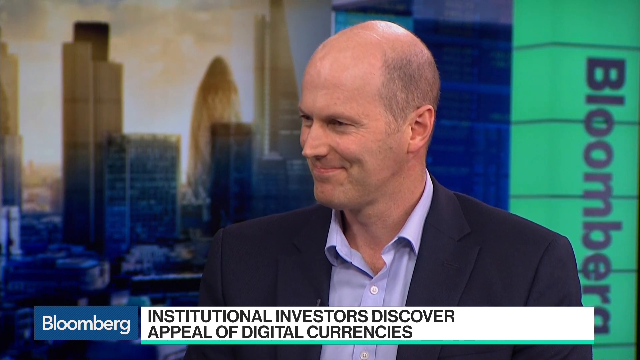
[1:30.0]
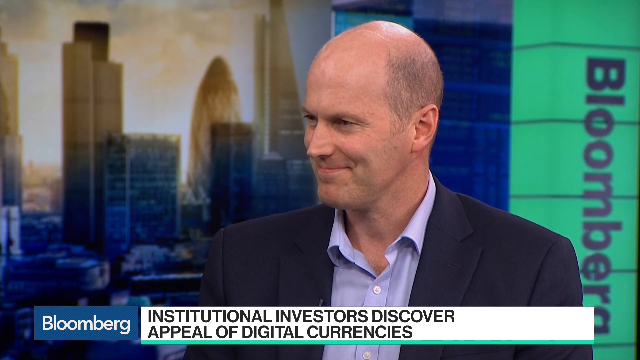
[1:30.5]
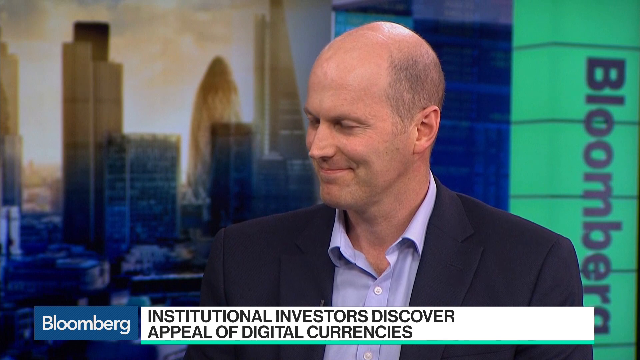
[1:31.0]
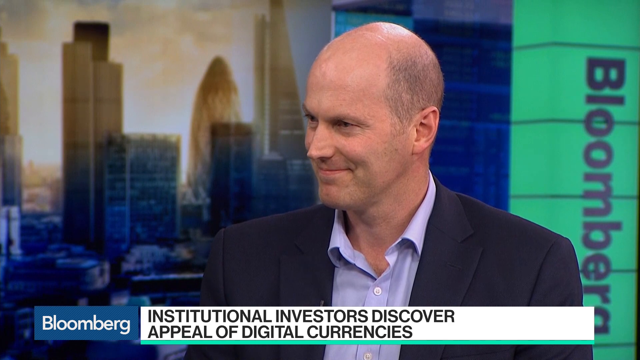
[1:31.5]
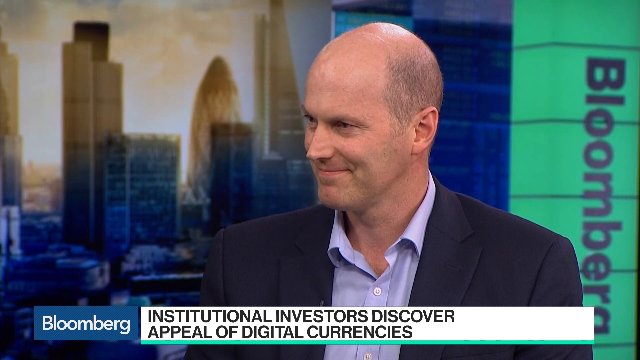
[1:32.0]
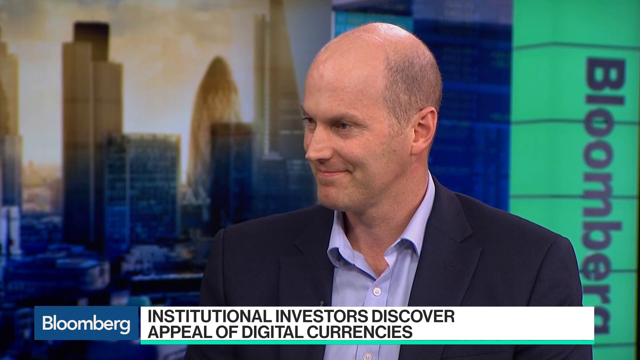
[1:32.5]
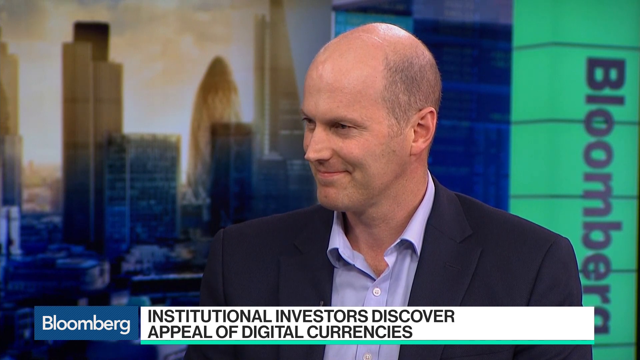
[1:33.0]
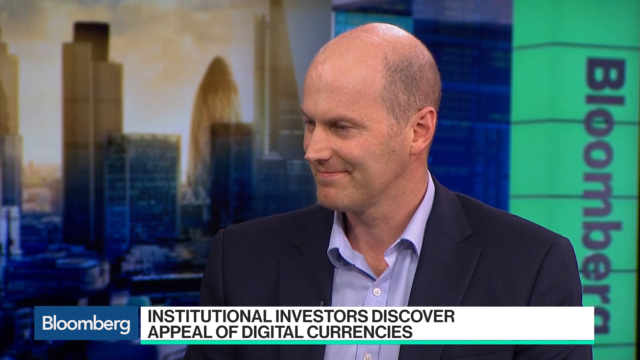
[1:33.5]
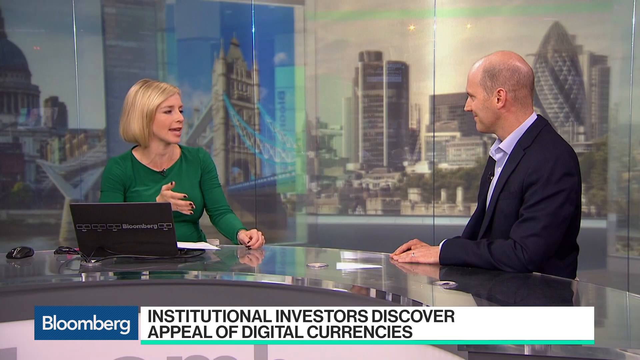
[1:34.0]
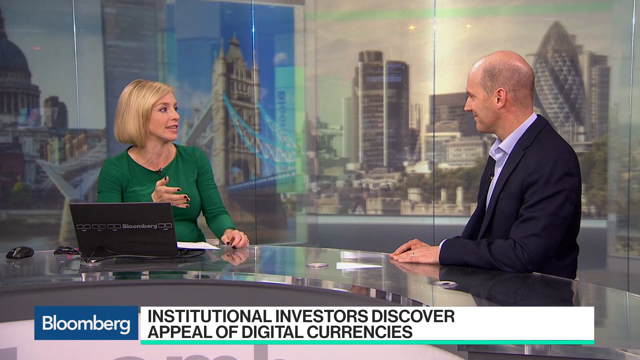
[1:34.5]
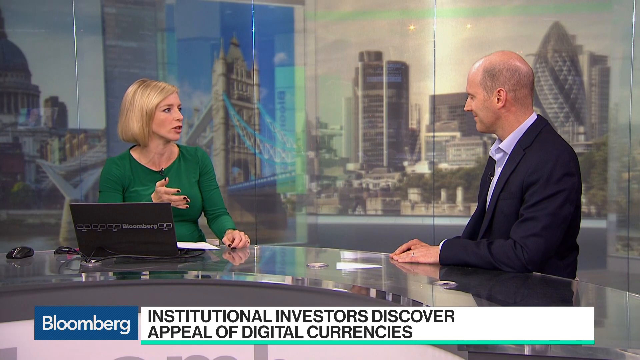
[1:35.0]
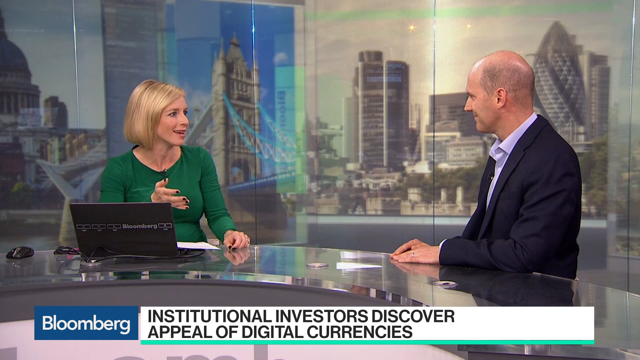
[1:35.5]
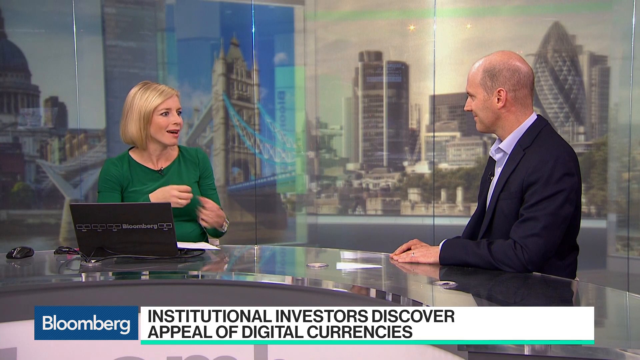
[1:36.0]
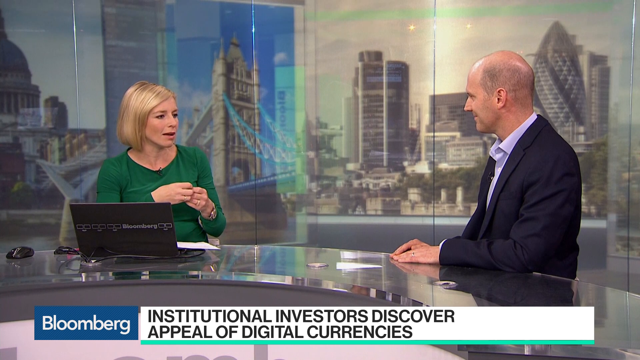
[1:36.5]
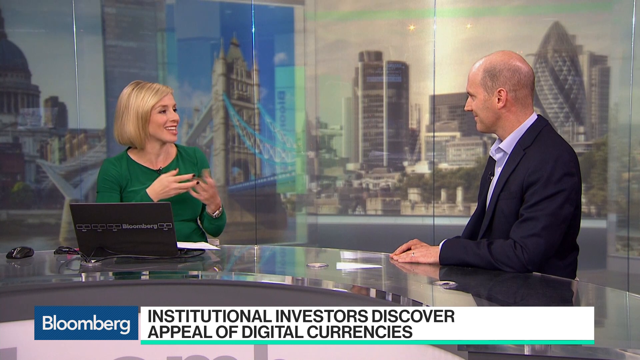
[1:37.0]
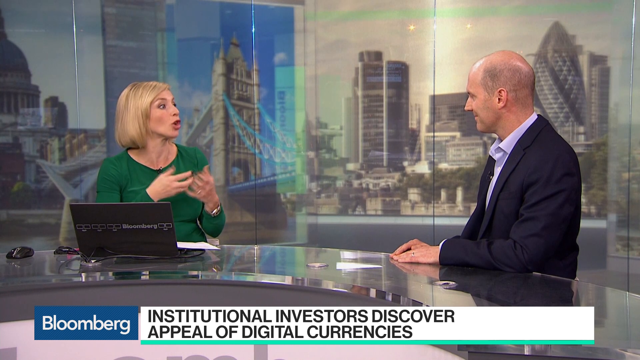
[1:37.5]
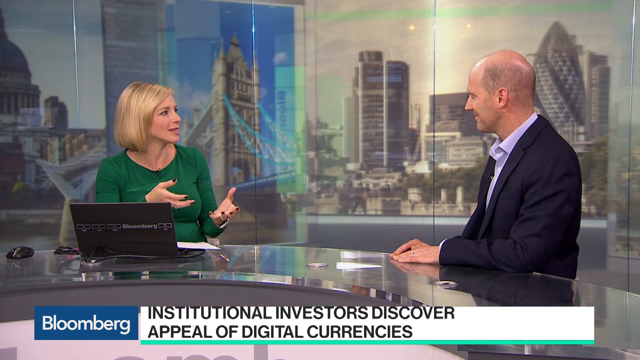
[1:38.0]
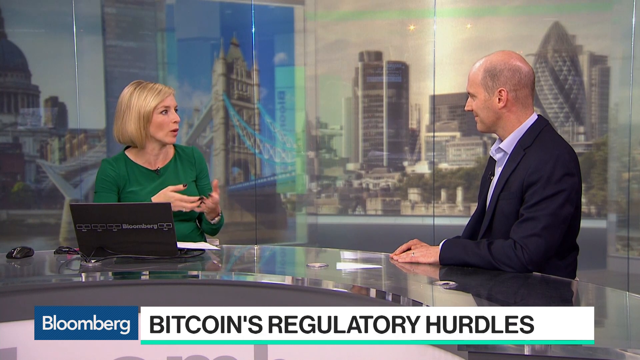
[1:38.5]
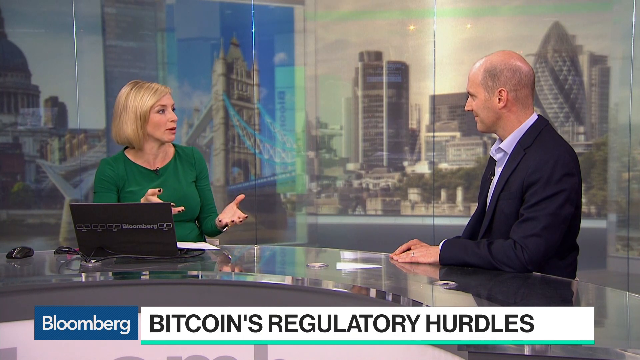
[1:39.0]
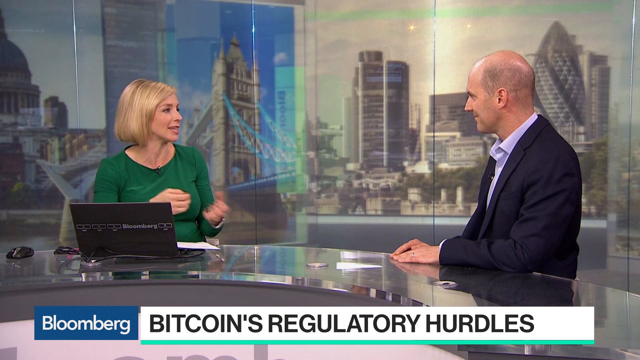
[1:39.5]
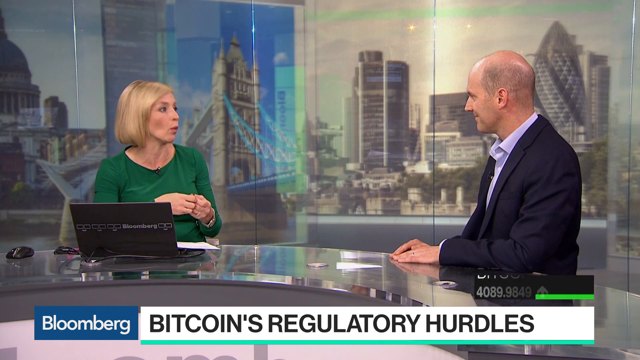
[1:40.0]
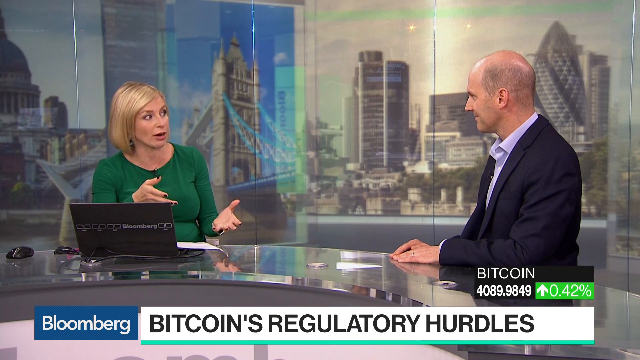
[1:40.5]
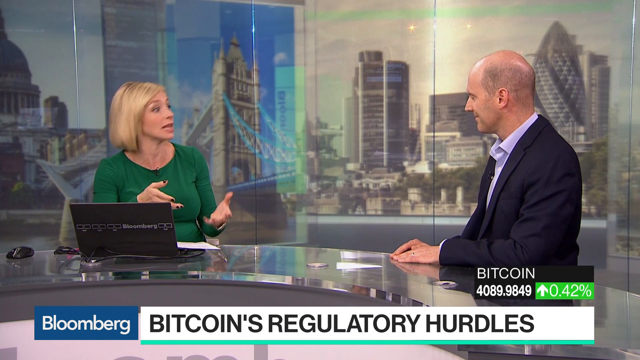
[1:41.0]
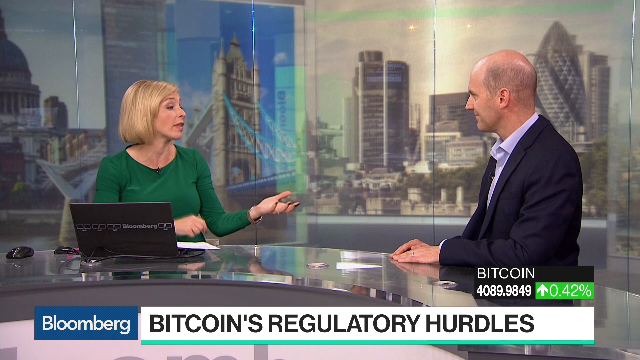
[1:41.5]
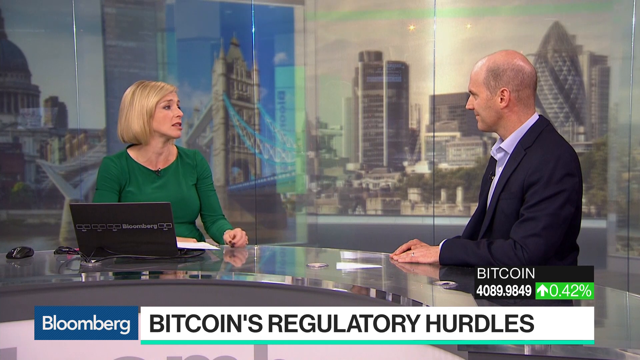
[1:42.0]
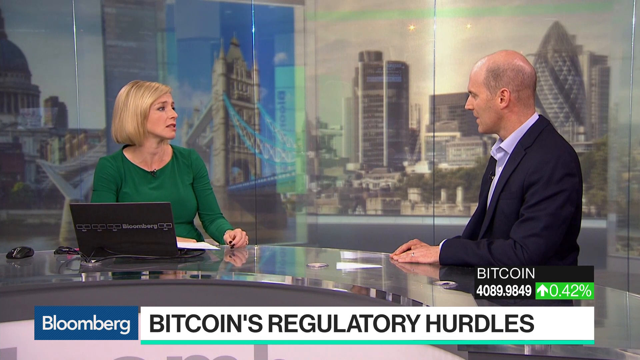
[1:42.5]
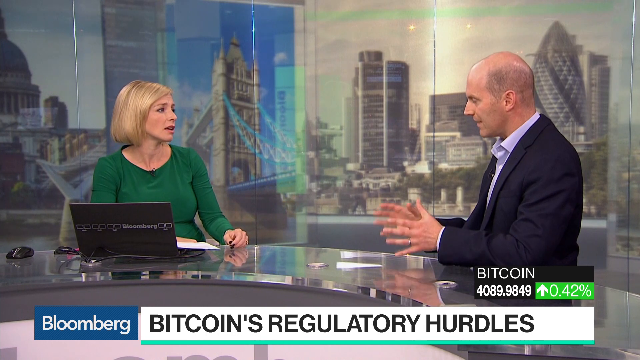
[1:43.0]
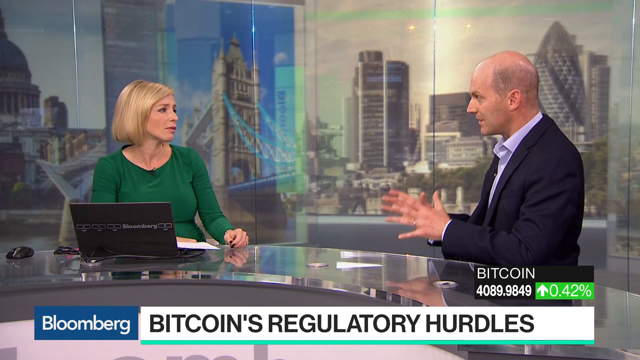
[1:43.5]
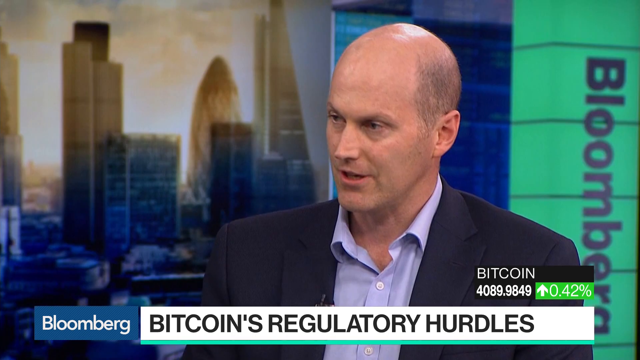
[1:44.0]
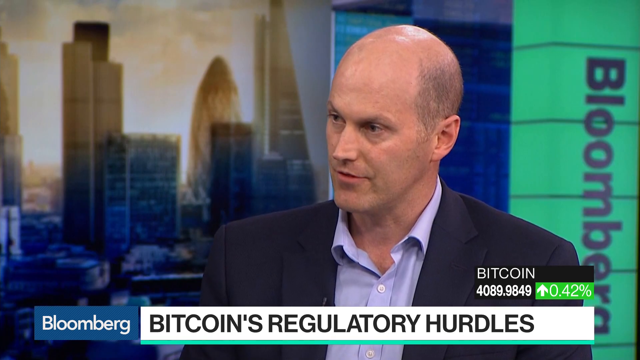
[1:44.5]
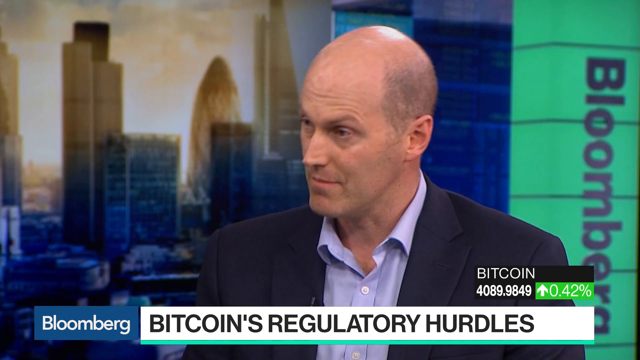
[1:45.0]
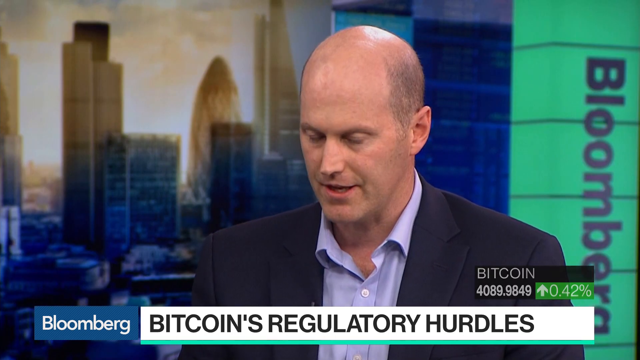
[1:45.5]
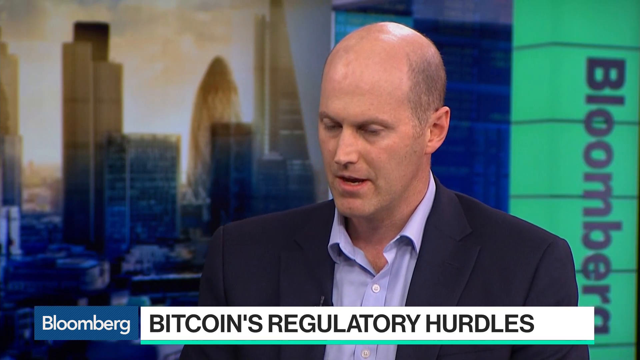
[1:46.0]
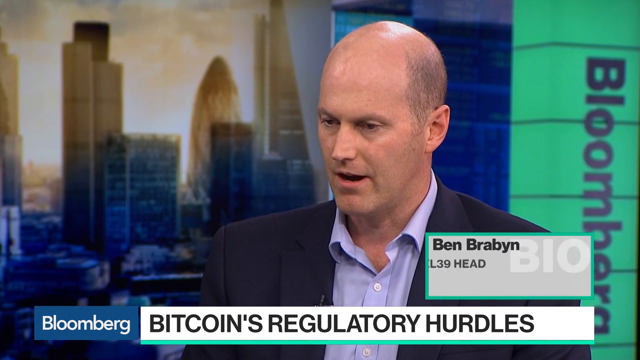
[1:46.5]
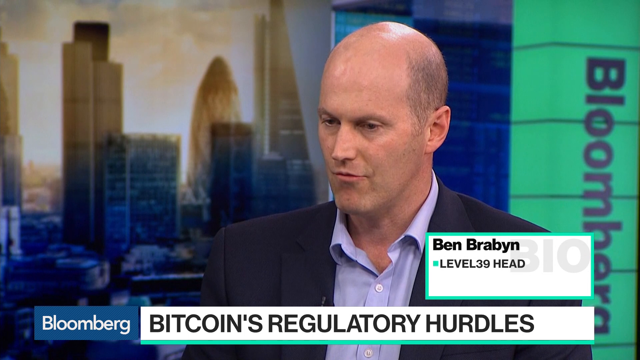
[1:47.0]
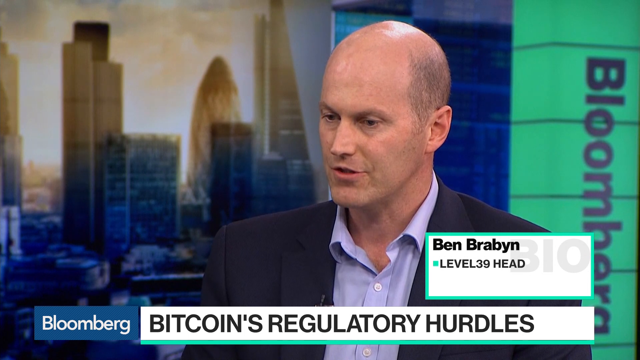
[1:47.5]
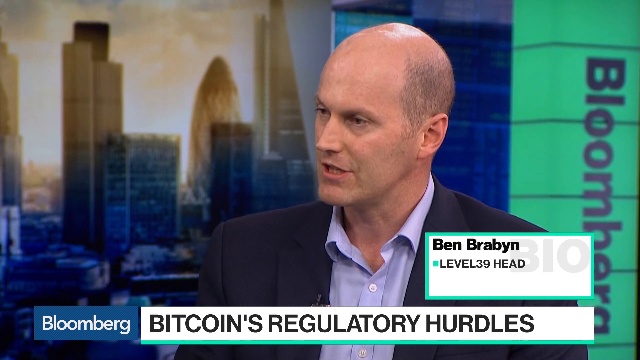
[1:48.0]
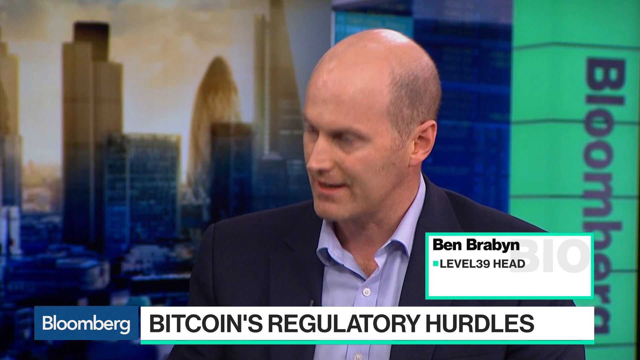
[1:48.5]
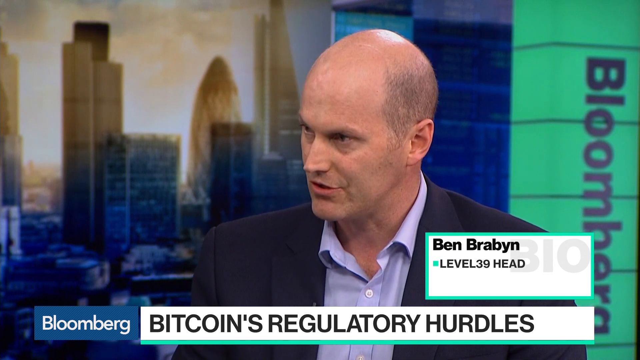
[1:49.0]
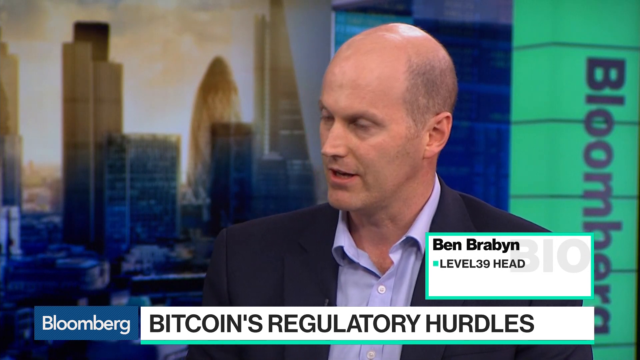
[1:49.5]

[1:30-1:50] Ben Brabyn is on screen, still wearing the same dark jacket with the light blue shirt. Here he doesn't seem to be talking; he seems quiet and listening. Below him is still the caption "institutional investors discover appeal of digital currencies," and on the left there still seems to be the Bloomberg logo. The video quickly switches to the woman interviewing him, still in the green top, with Ben Brabyn's credential "Level 39 head" shown again. The woman seems to have asked him a question, as Ben Brabyn then seems to be responding. Alongside him there seems to be Bitcoin information reading "Bitcoin 40899849," which seems to have risen by 0.42%. Ben Brabyn seems to be explaining, with his credentials displayed on the screen, as the shot ends.